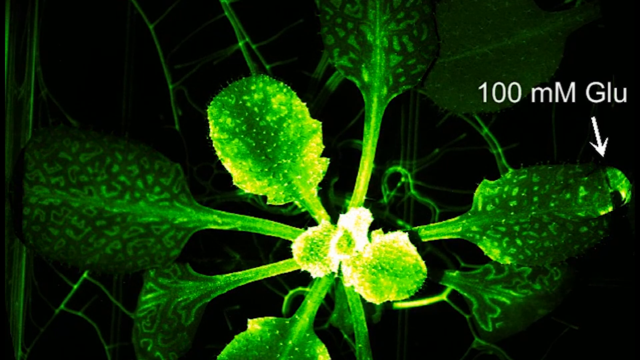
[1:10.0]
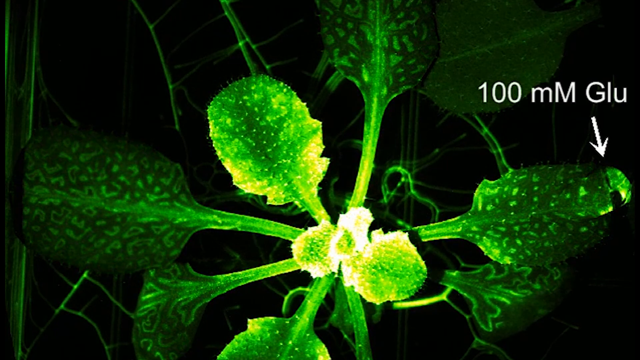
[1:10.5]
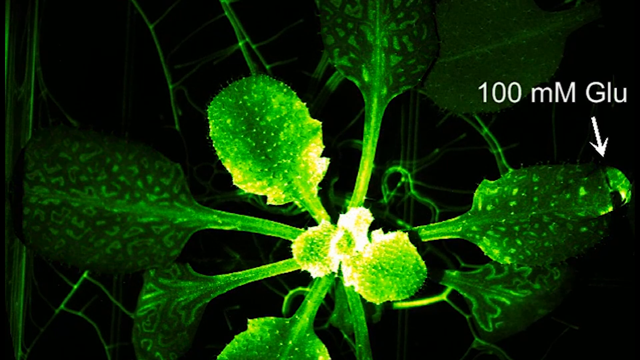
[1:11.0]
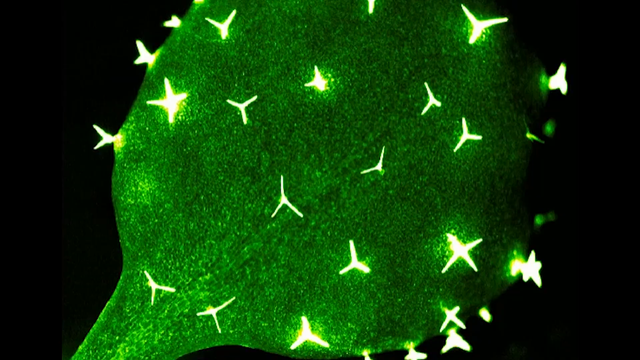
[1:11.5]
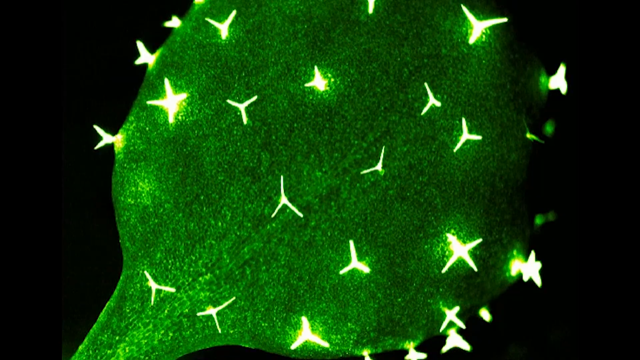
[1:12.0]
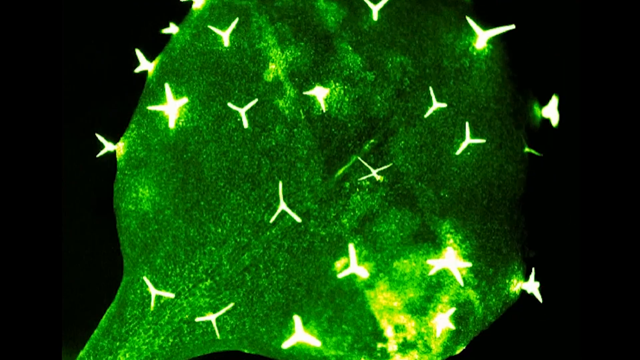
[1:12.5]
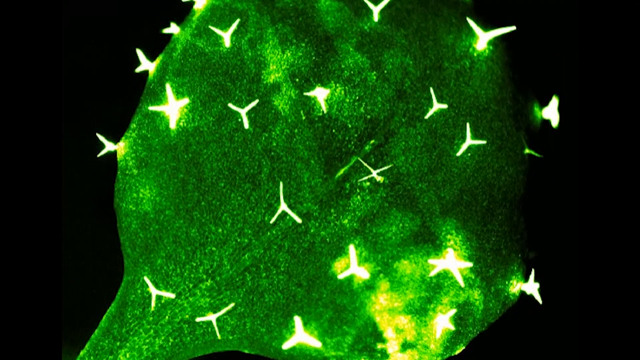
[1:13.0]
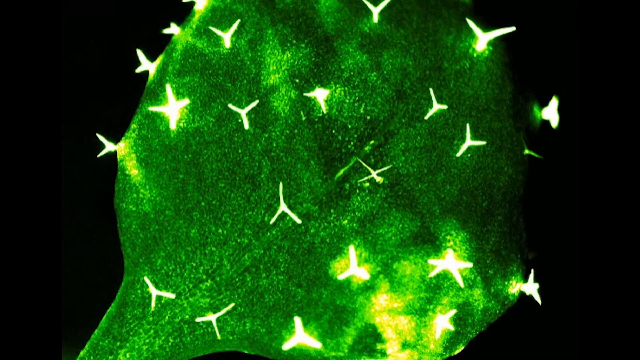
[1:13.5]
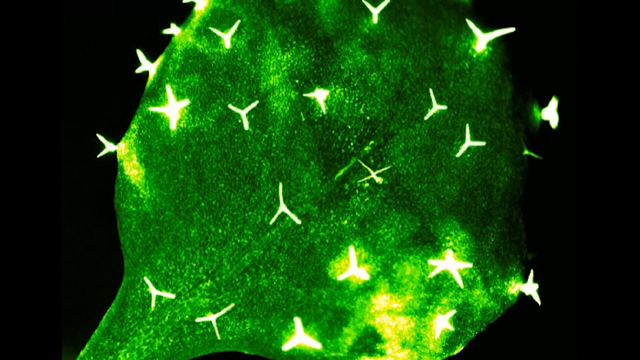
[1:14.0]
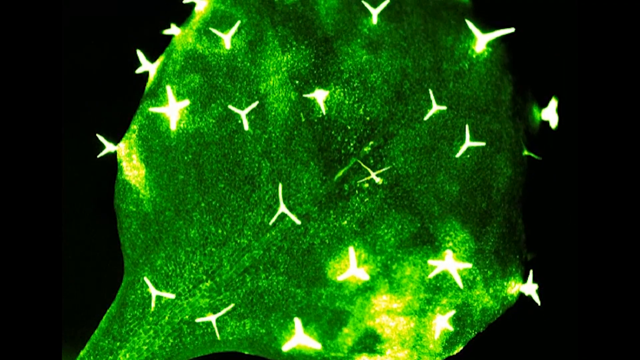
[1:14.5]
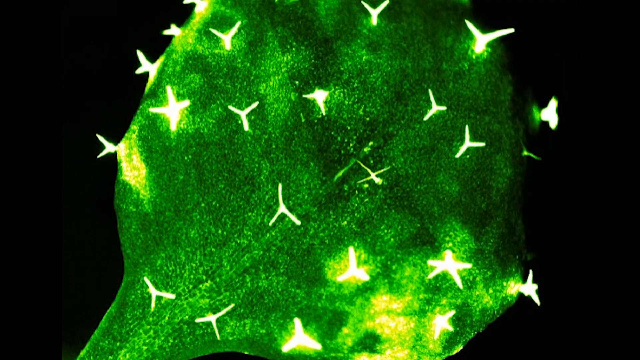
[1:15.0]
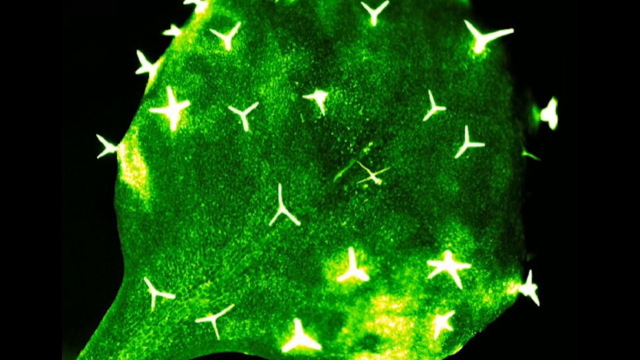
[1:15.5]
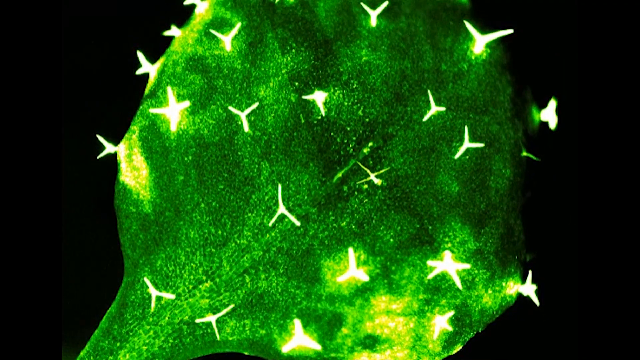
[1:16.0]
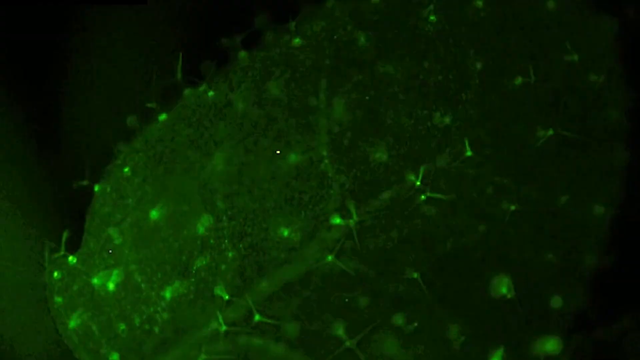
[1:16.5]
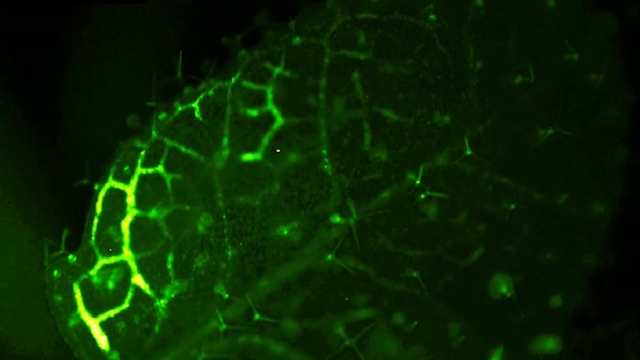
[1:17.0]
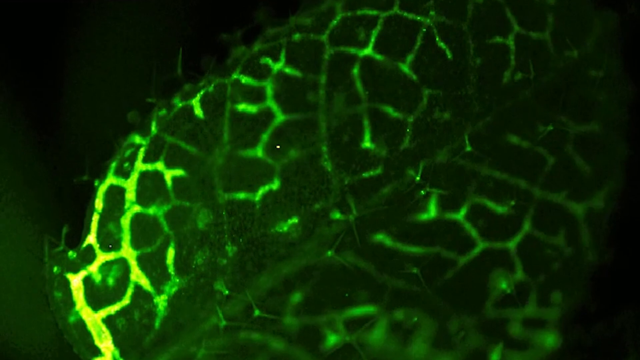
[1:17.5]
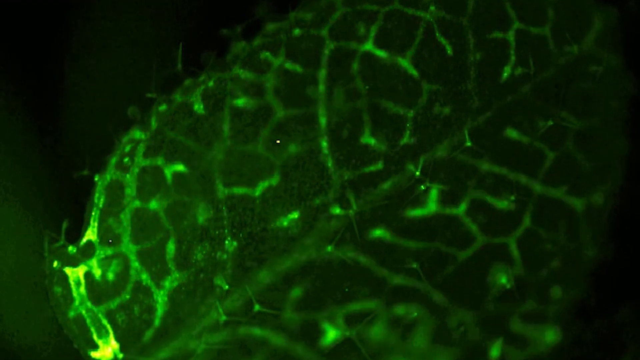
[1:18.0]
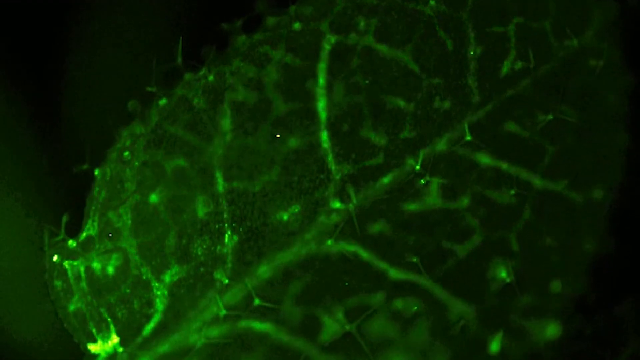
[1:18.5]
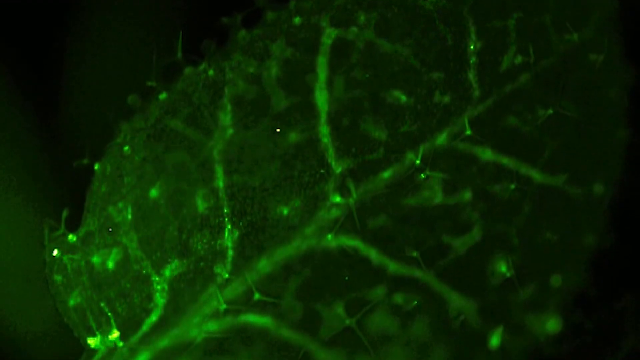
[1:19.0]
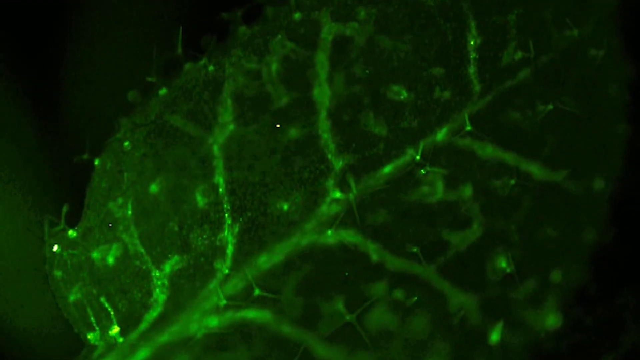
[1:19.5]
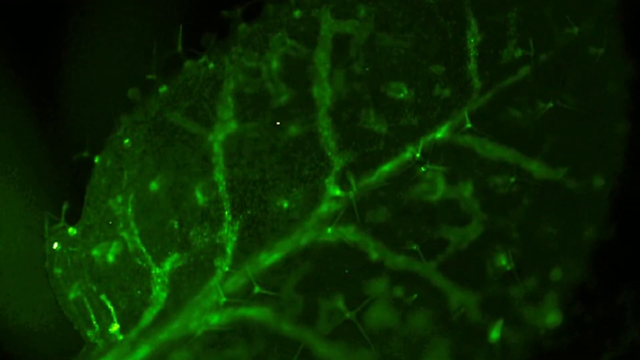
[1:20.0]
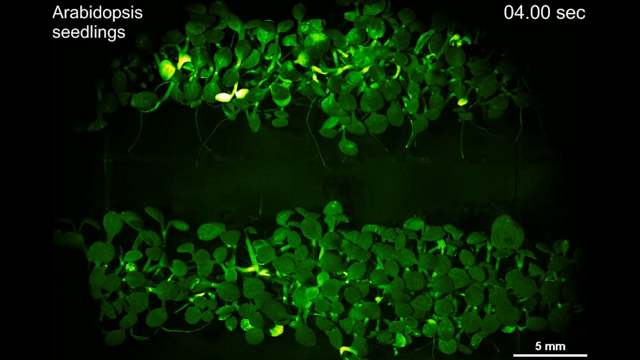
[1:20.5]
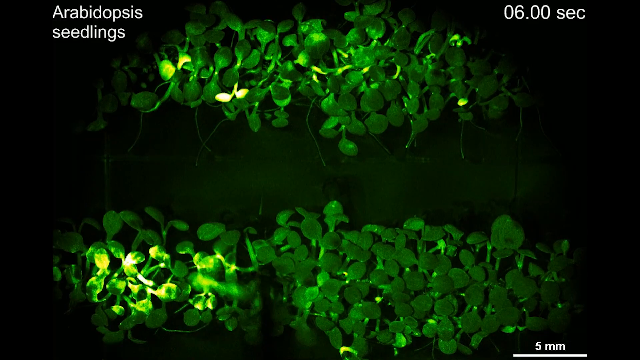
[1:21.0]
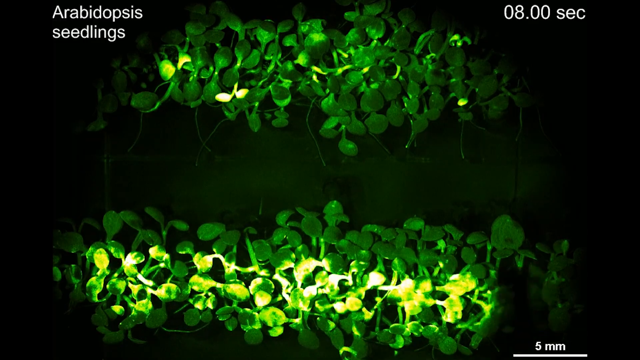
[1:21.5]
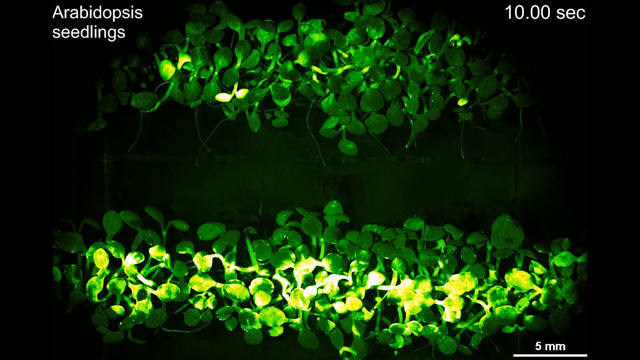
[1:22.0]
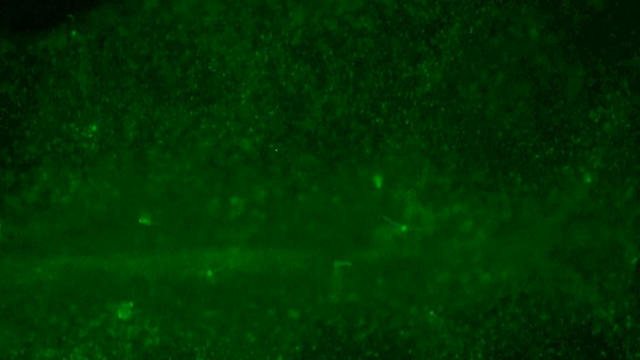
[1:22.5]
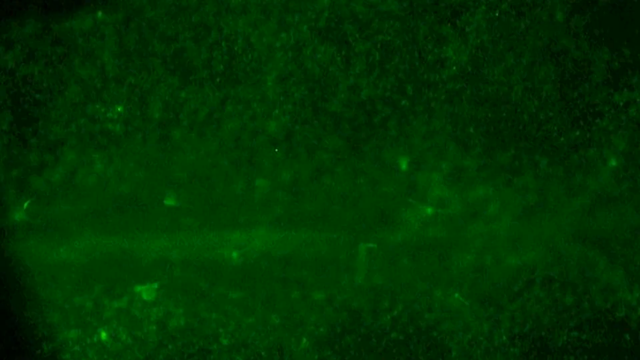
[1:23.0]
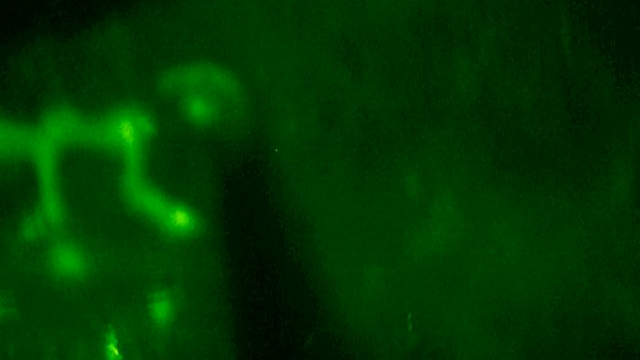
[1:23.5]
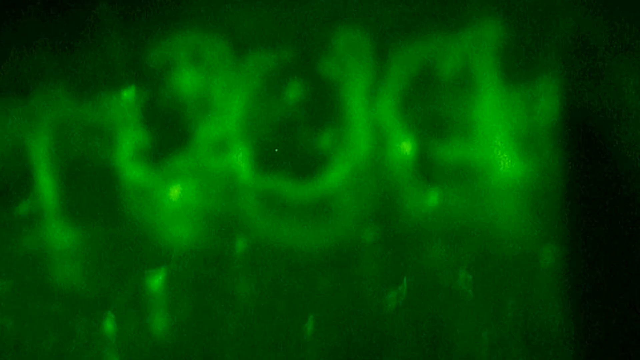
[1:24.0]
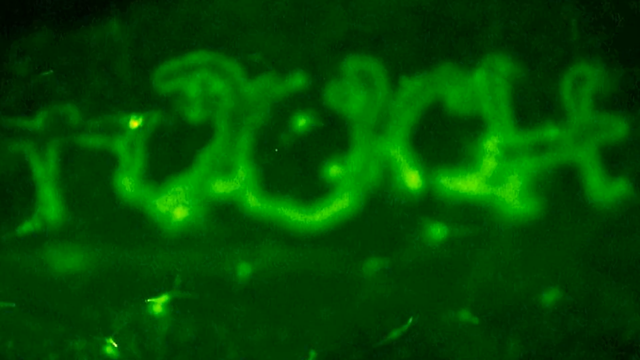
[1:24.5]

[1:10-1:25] Plant leaves are shown under extreme magnification and illumination, in several animated clips of the leaves illuminating. The illuminated areas seem to indicate either parts of the plant with high concentrations of glutamate or parts that act as glutamate receptors, possibly the flow of glutamate through the leaf, though this is uncertain. The setting seems to be a lab.